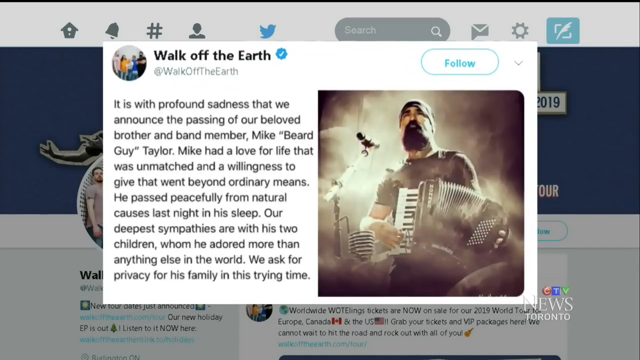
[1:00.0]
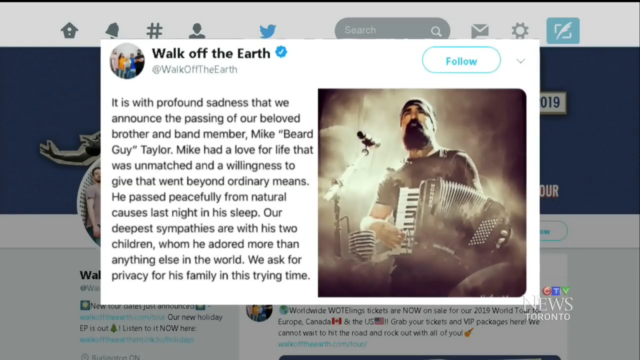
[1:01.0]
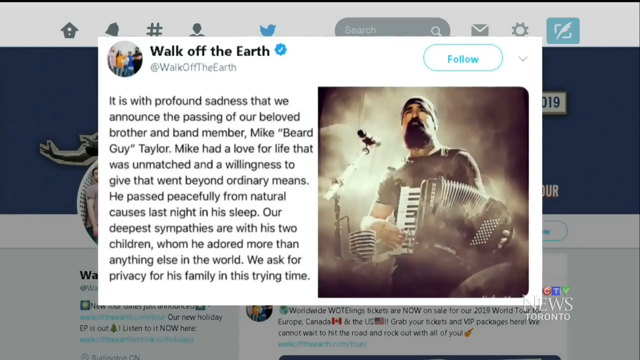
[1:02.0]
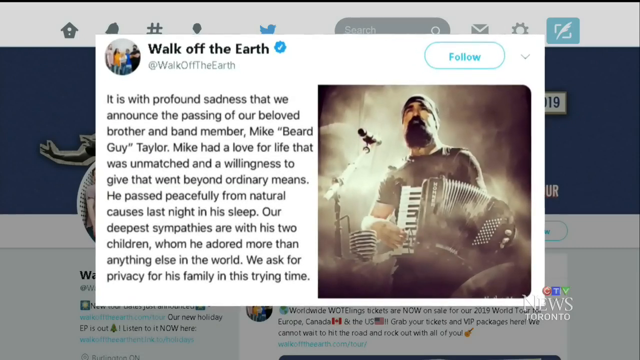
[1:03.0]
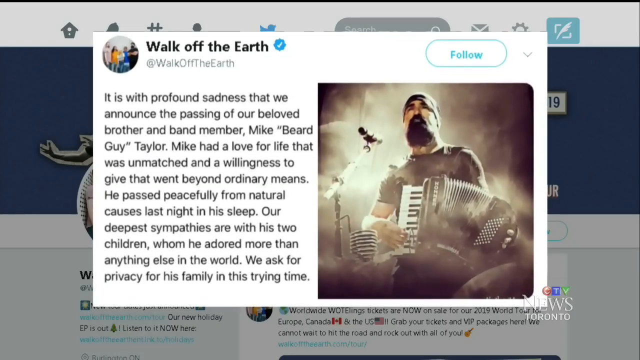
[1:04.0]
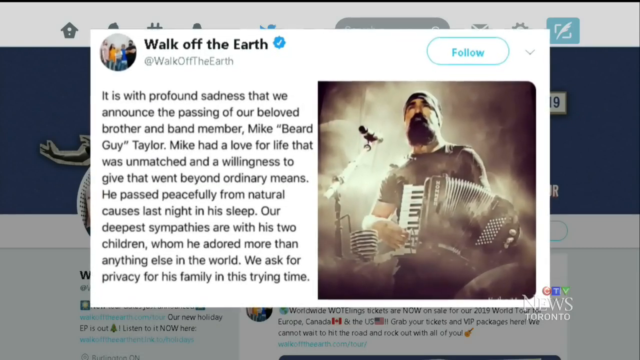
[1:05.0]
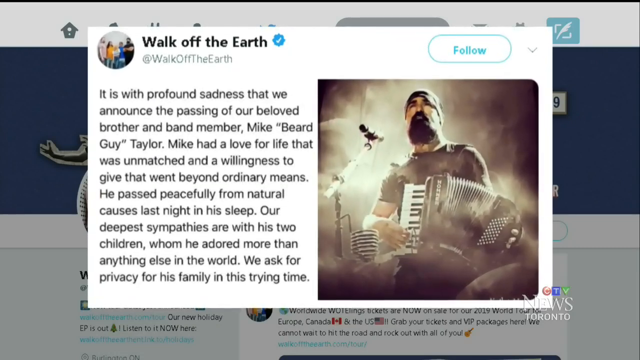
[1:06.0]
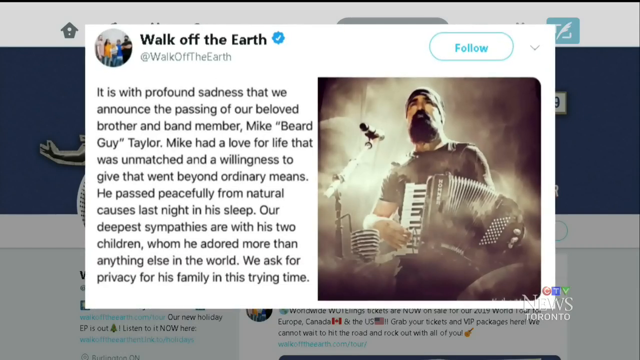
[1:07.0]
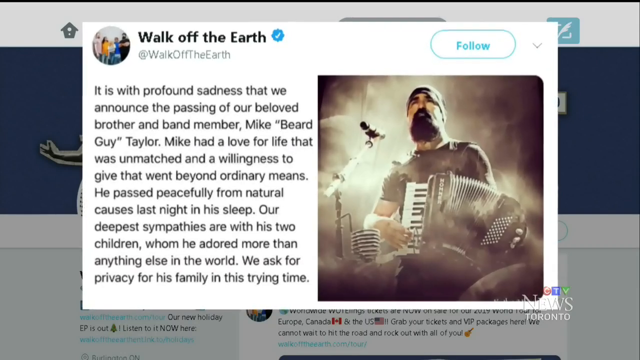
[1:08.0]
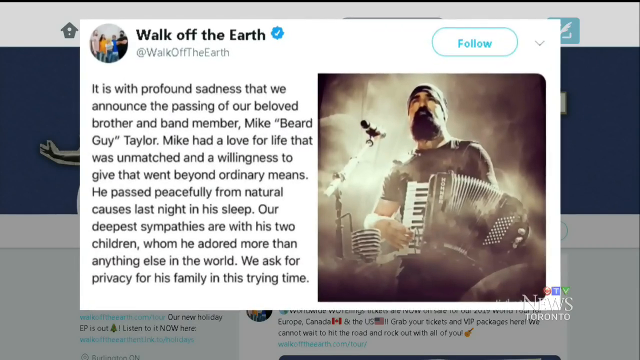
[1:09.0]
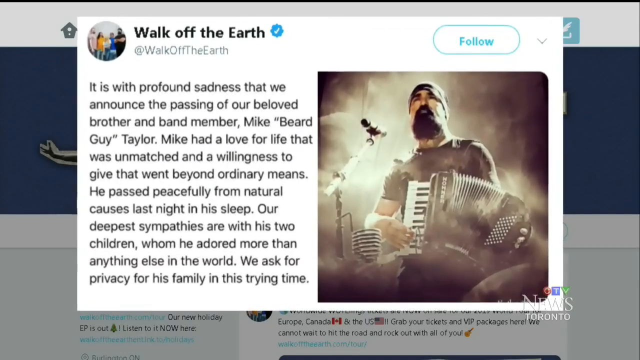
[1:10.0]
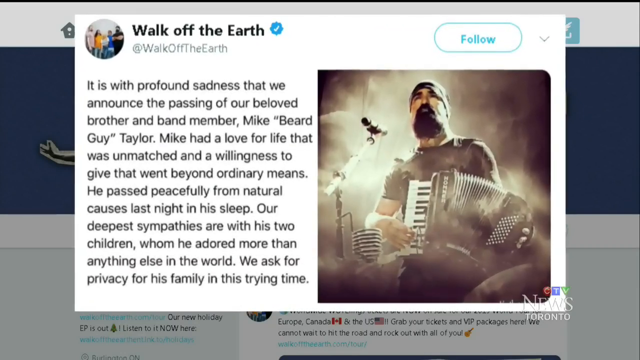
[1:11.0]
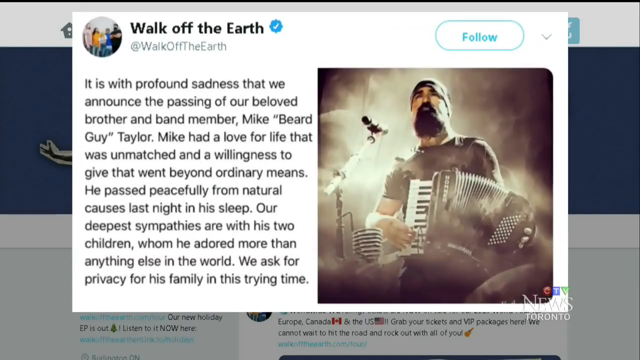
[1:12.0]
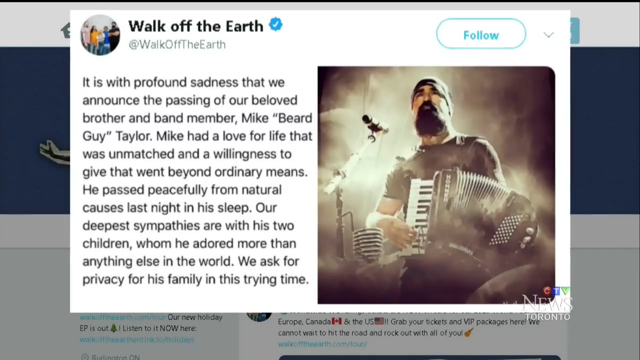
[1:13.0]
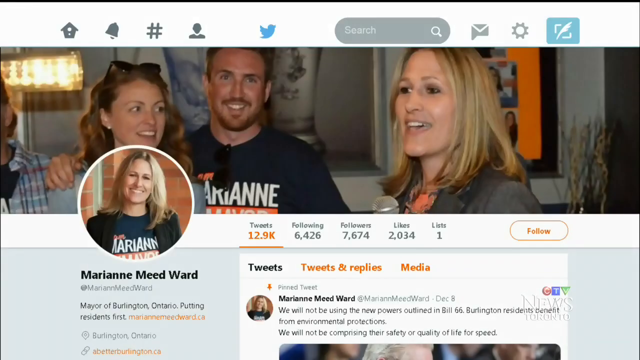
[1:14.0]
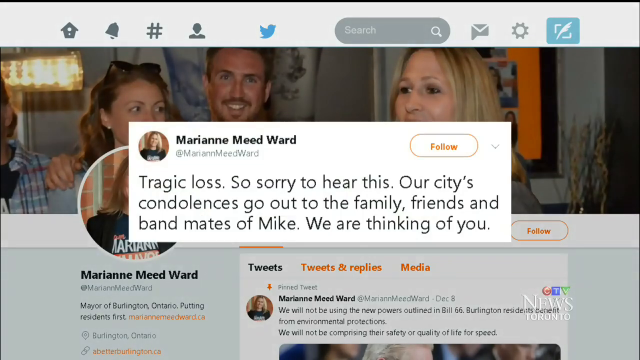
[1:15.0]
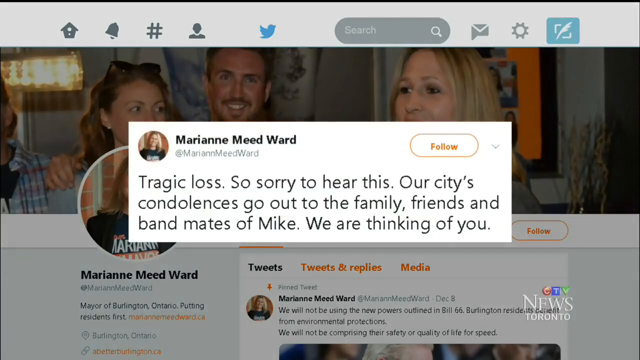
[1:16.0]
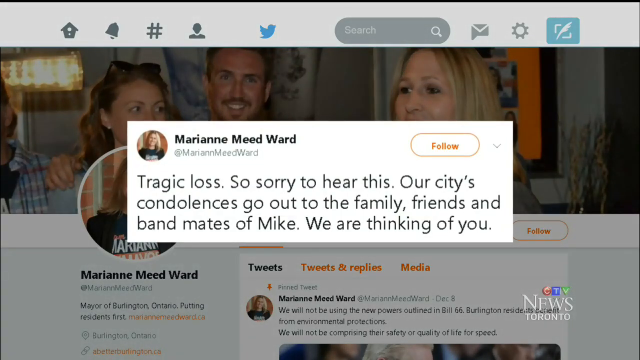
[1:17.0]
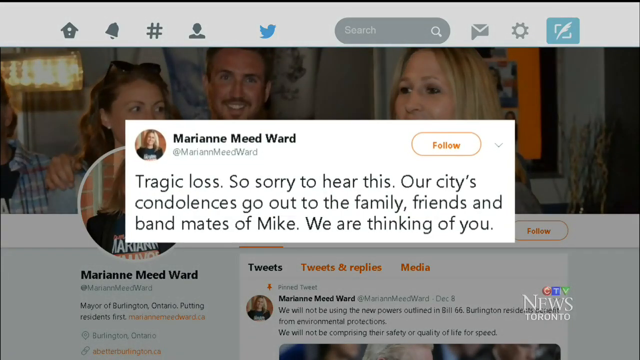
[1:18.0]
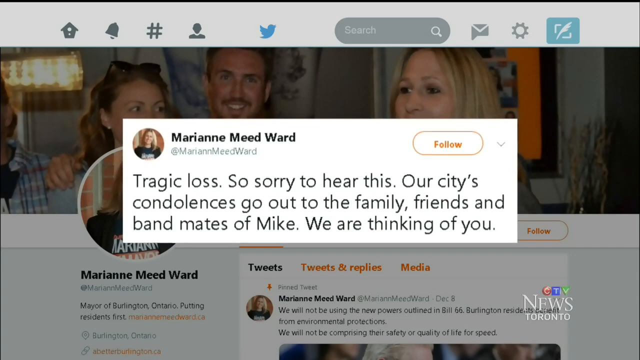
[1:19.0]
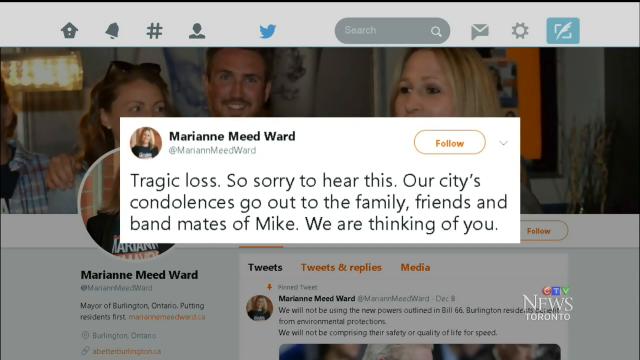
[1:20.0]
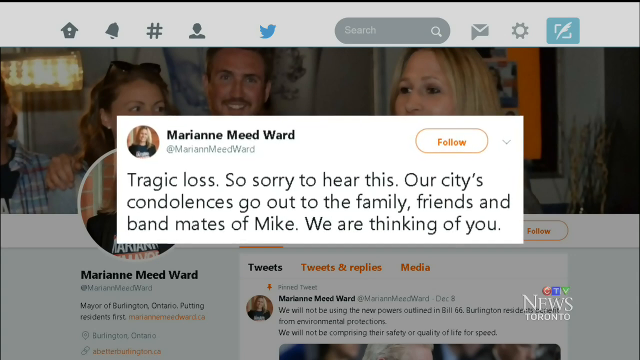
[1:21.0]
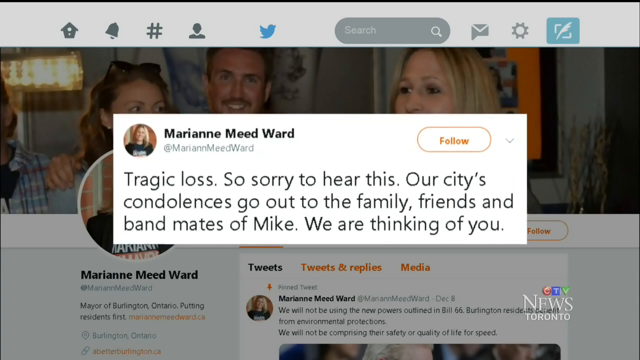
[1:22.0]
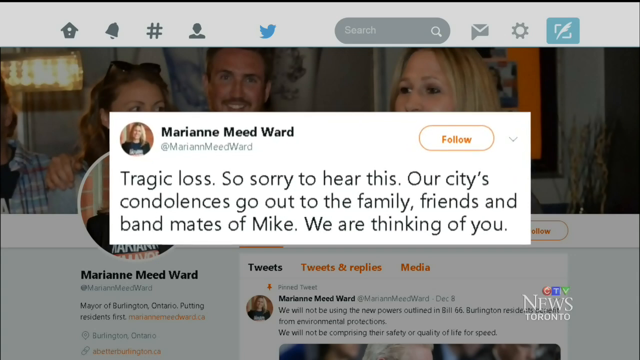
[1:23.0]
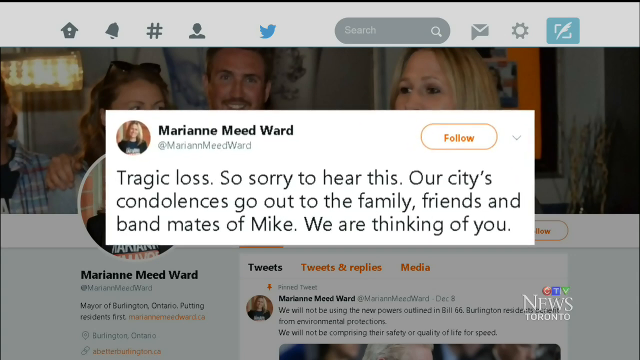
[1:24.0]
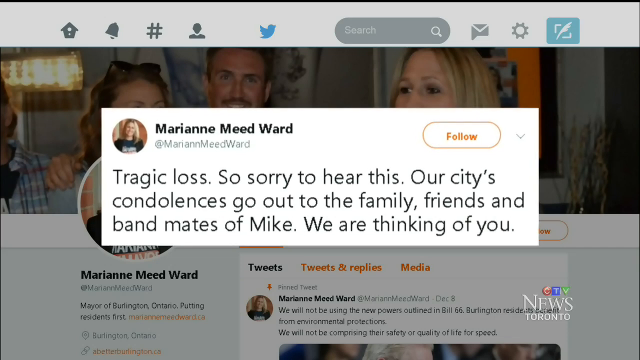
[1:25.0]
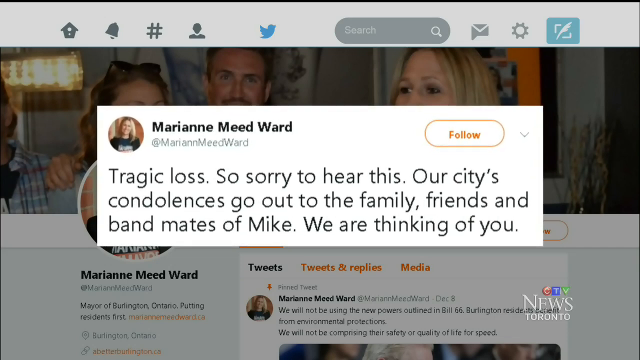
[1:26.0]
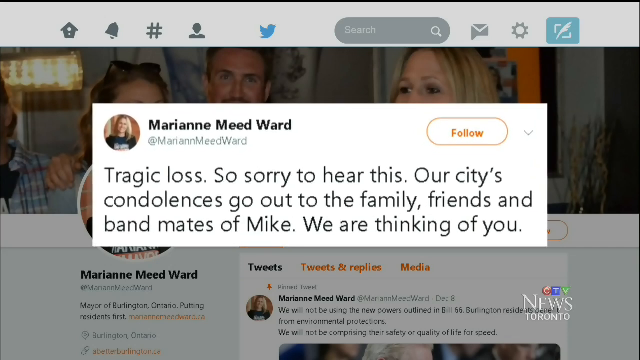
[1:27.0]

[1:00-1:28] The white pop-up, headed "Walk Off The Earth", remains over the band's website background, with the text: "It is with profound sadness that we announce the passing of our beloved brother and band member, Mike Beard Guy Taylor. Mike had a love for life that was unmatched and a willingness to give that went beyond ordinary means. He passed peacefully from natural causes last night in his sleep. Our deepest sympathies are with his two children whom he adored more than anything else in the world. We ask for privacy for his family in this trying time." To the right of the text is a mystical black-and-white photo of Mike holding an accordion; he has a beard, wears a short-sleeve crew neck t-shirt and a tight-fitting stretch cap, and is in front of a microphone on a boom. The camera slowly zooms in, and the CTV News Toronto logo is in the bottom right corner. At the very end, the video goes to a web page headed Marianne Meed Ward that appears to be a Twitter-type page, with buttons and headings referring to tweets, tweets and replies, and media. A pop-out on a white background in the center of the screen is headed Marianne Meed Ward, with her avatar photo in the upper left. It reads: "Tragic loss. So sorry to hear this. Our city's condolences go out to the family, friends, and bandmates of Mike. We are thinking of you." The camera slowly zooms into this black text on a white background, and the video fades to its end.